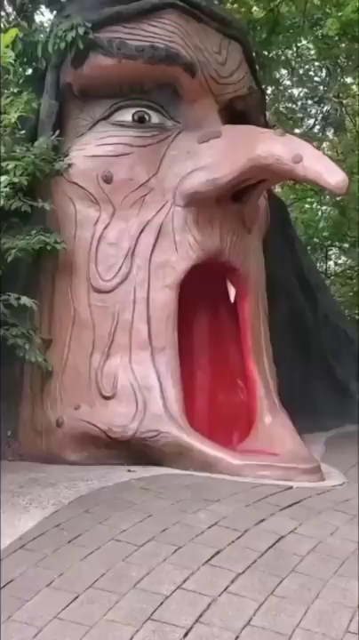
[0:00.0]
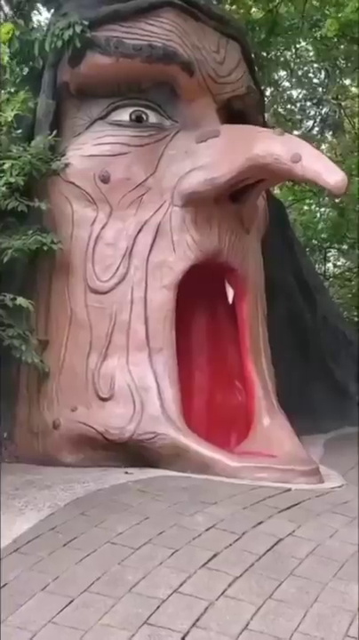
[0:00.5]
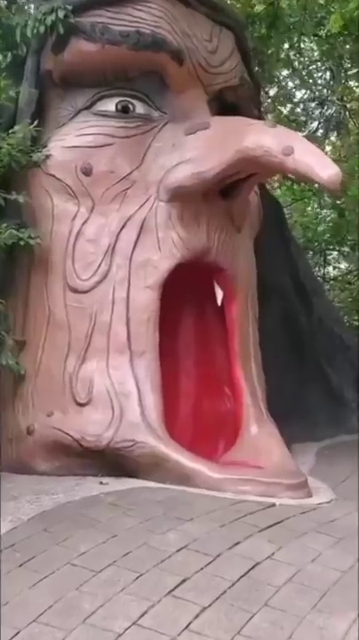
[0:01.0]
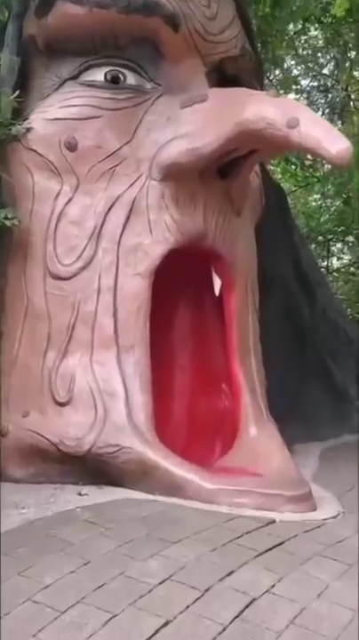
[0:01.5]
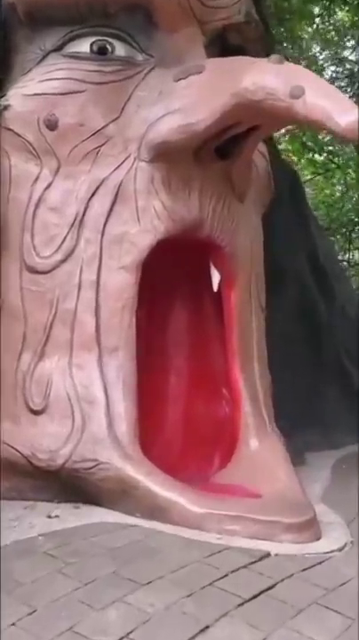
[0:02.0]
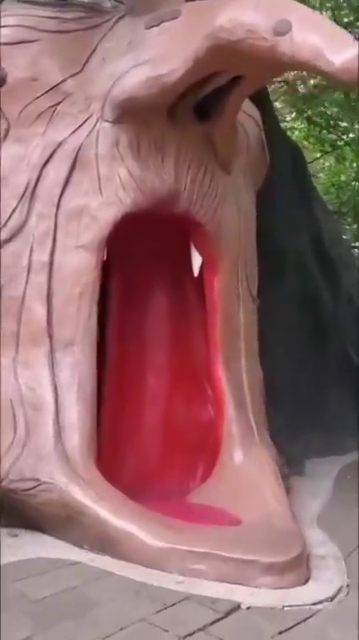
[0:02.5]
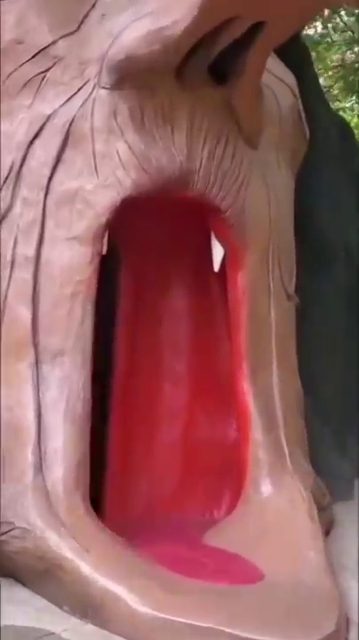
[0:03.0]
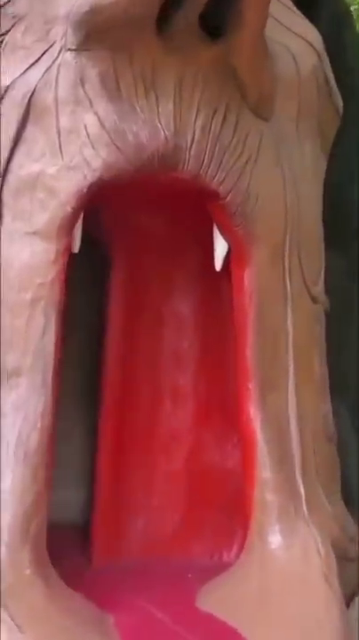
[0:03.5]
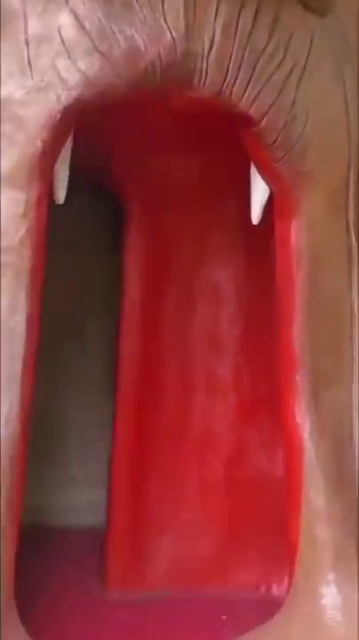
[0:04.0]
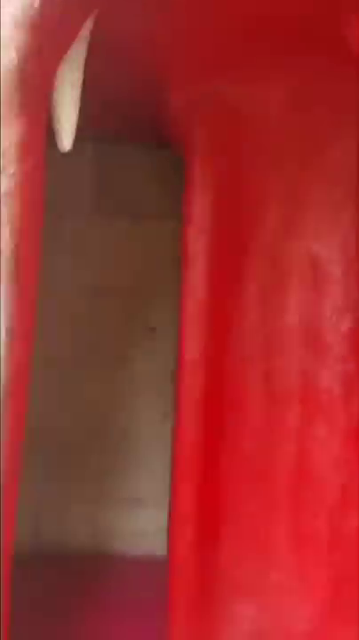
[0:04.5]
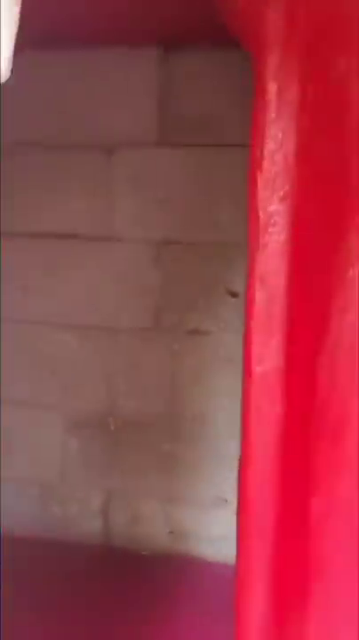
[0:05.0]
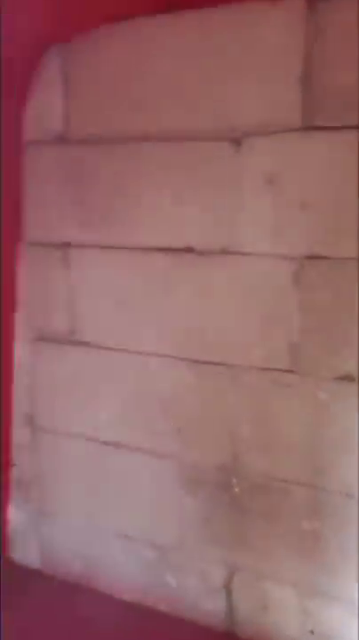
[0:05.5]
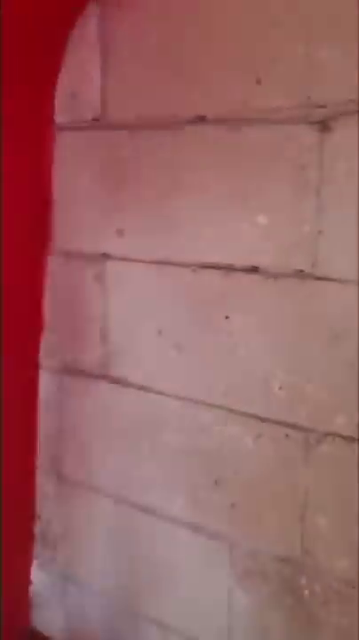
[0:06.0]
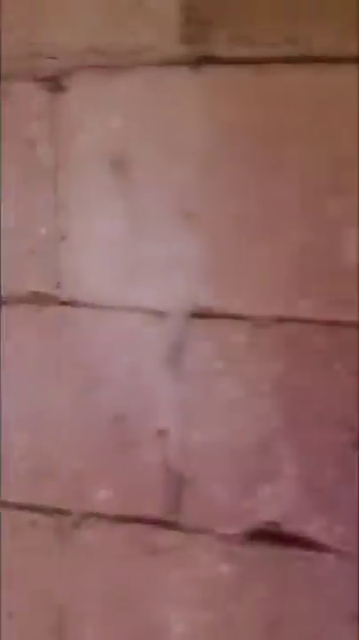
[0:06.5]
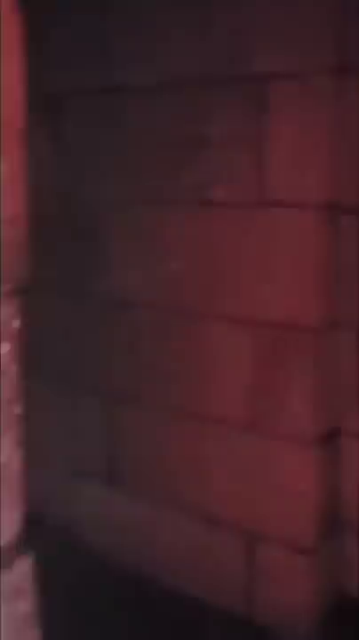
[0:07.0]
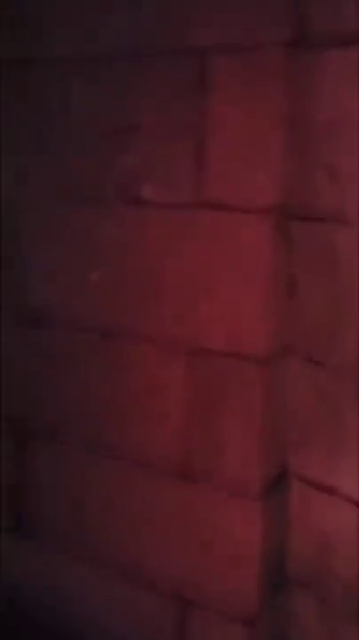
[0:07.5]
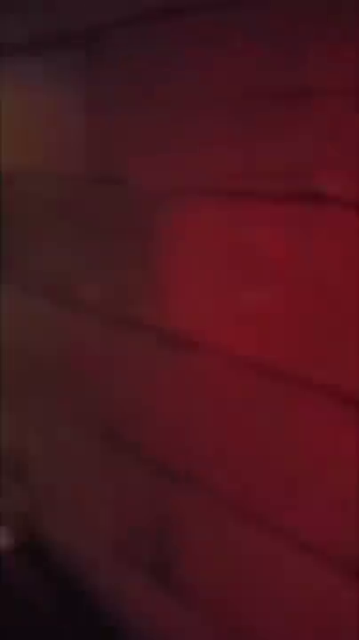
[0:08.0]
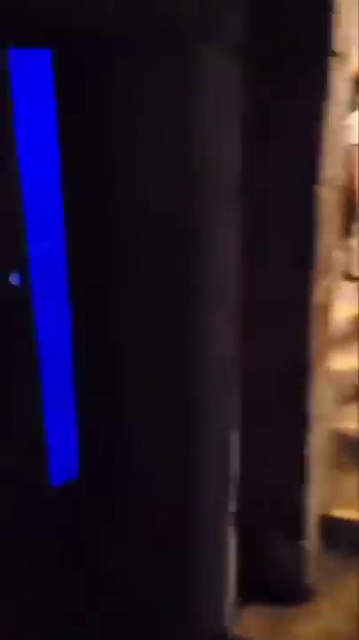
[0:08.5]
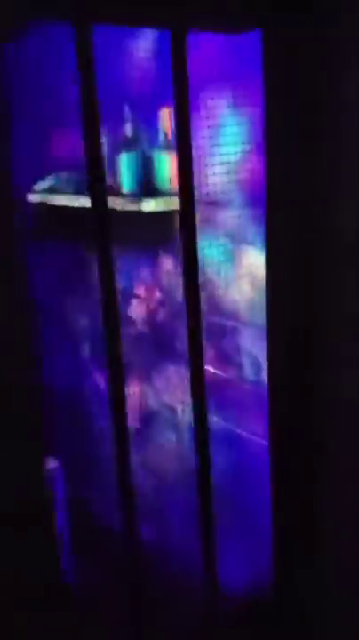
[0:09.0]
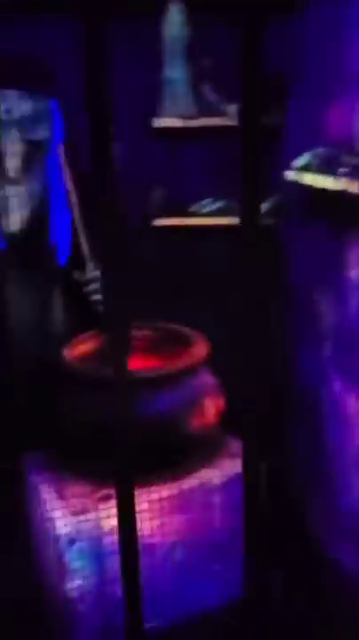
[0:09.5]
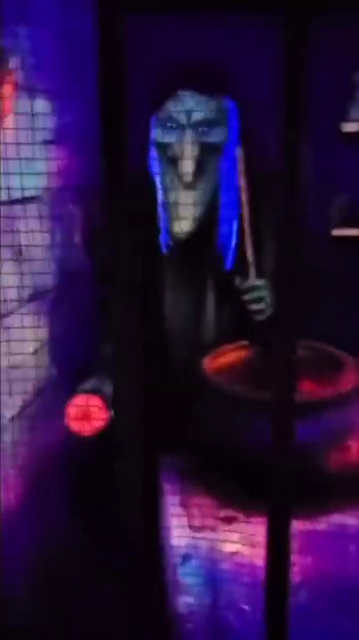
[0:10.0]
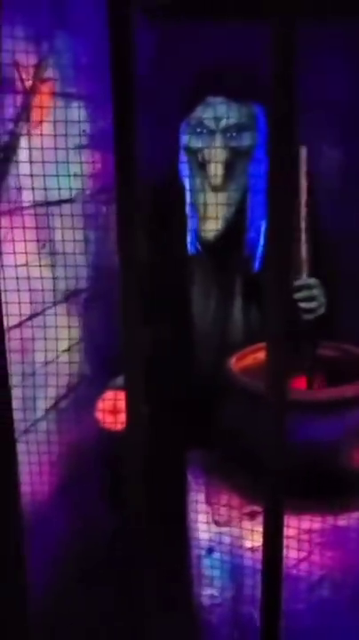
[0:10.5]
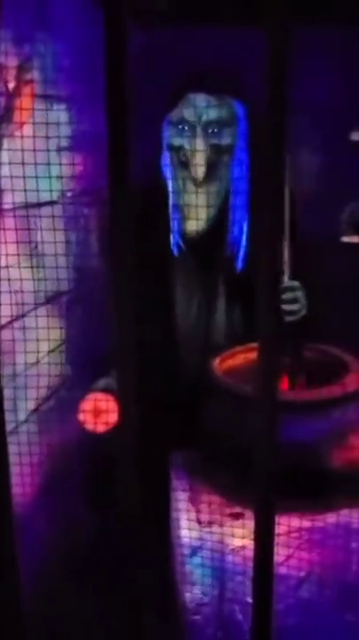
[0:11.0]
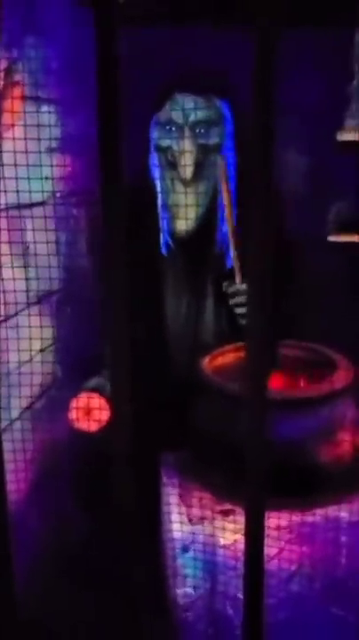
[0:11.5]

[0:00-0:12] The image almost looks like a tree that someone has carved, with a witch's face: an old crone's nose that is kind of beaked down and has a mole. The view walks into the old crone's mouth, which is red, and her tongue is visible. Going around the corners inside her mouth, there is a screened-in portion showing a witch stirring a cauldron with neon blue light behind her. She wears a black, pointy witch's hat and a black outfit, and the liquid inside the cauldron is neon blue. The witch is obviously an animatronic. While turning the corner to look into that space, a set of stairs leading upstairs is visible, but the view does not travel upstairs; instead it looks in on the scene of the witch stirring the cauldron.